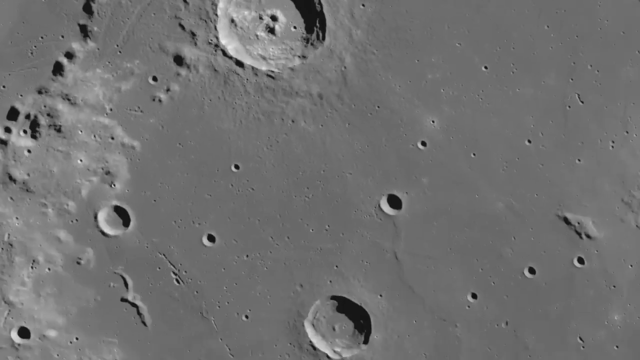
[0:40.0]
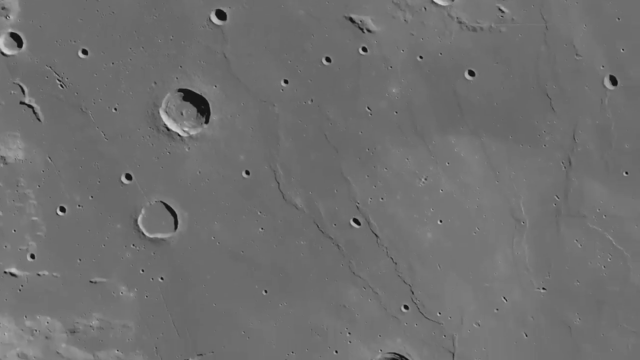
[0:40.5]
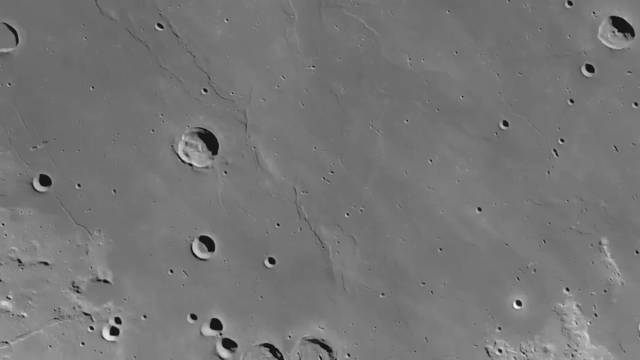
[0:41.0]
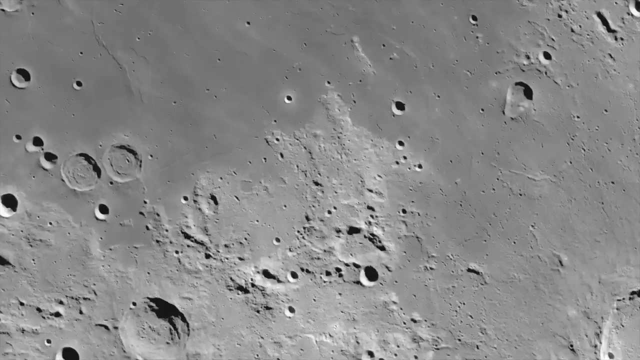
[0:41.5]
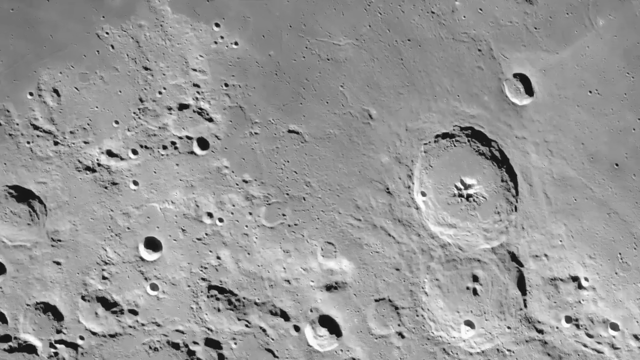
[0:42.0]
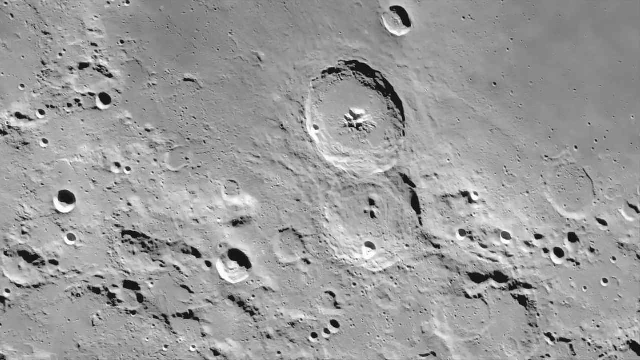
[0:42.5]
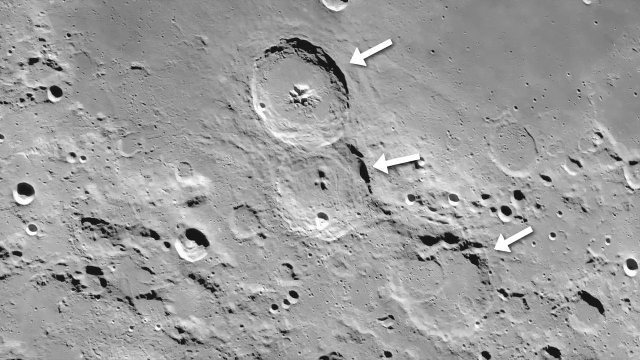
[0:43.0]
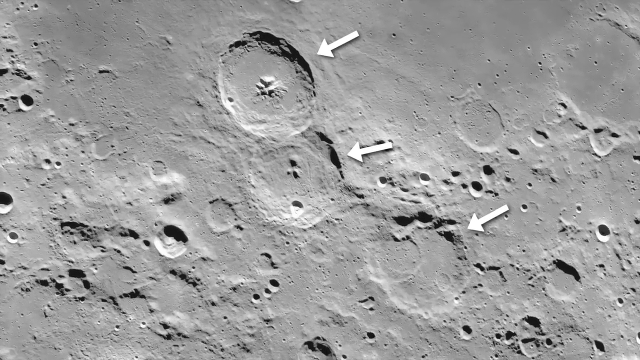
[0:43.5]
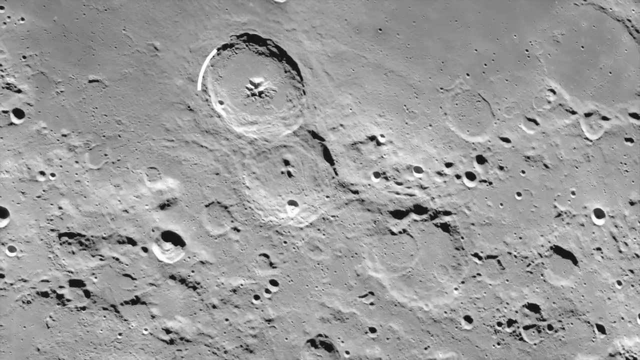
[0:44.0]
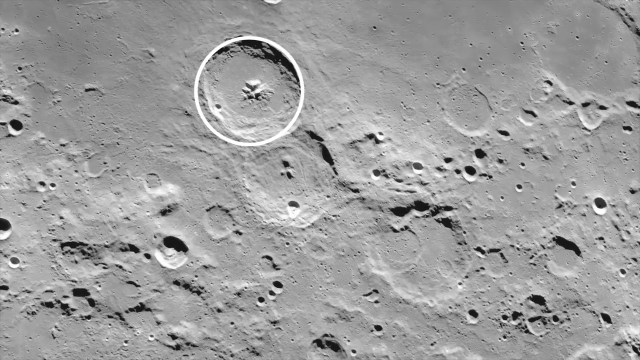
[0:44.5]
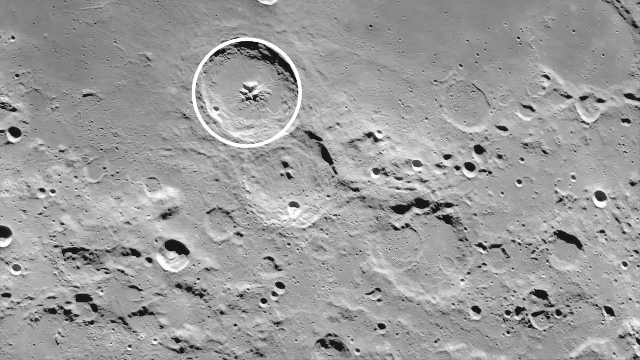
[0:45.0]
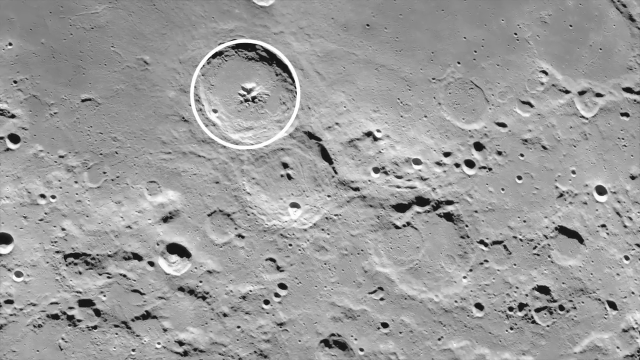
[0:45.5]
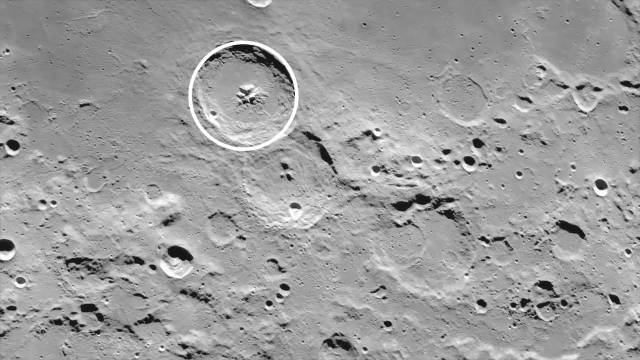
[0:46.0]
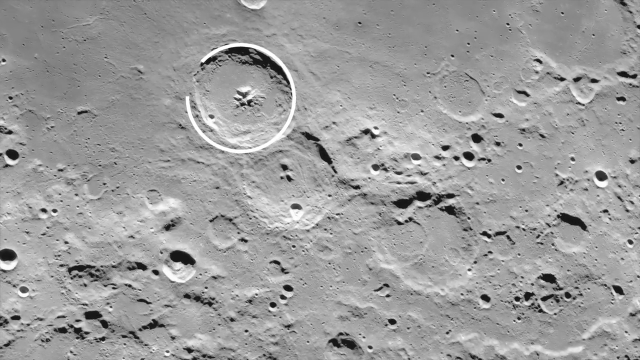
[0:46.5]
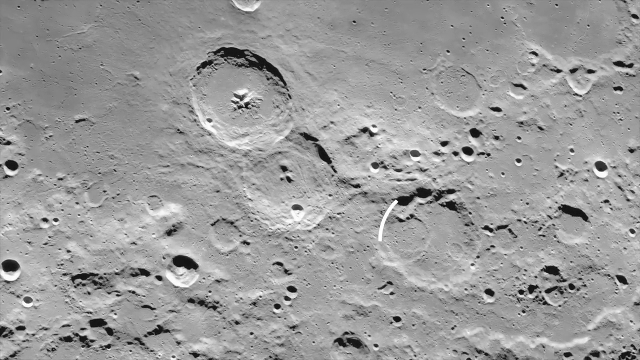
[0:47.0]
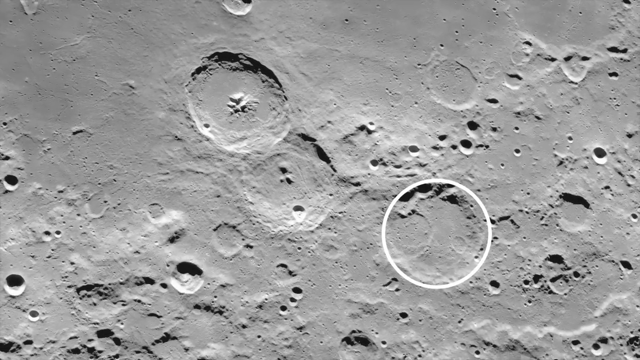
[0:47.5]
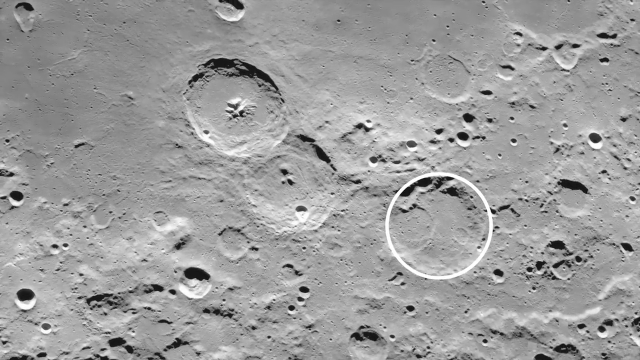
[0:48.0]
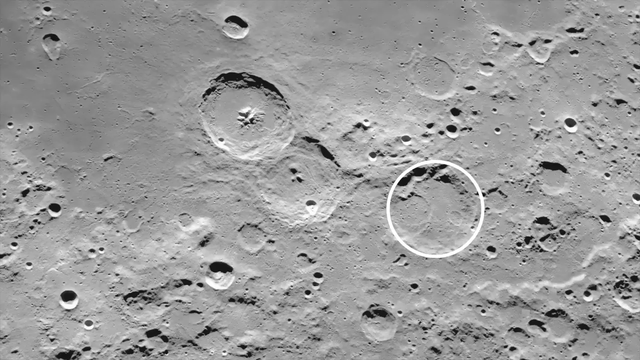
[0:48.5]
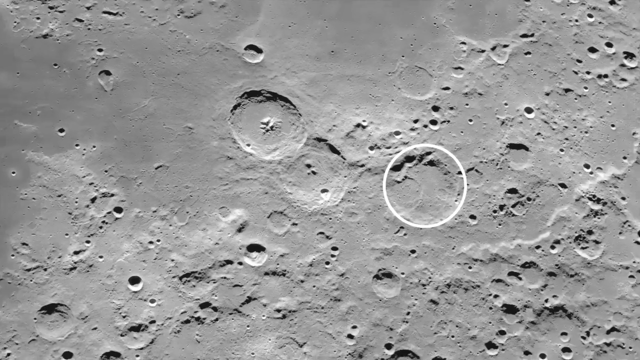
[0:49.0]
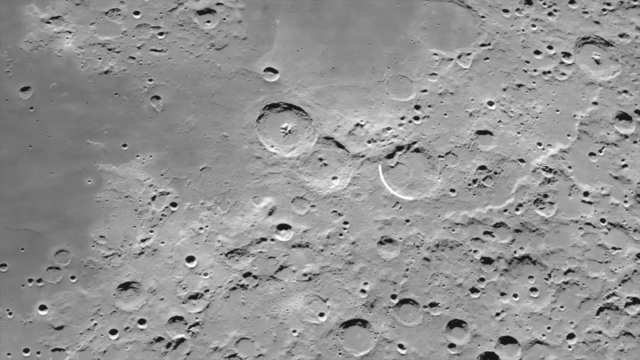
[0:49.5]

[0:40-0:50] A flat plain area of the moon is shown in black and white, with large stretches of completely flat plains dotted with large, small and medium-sized craters. The camera pans down and to the right before stopping at an area of more rugged terrain interspersed with large craters. Arrows appear around three separate craters that look to be complex, each showing inner walls as well as an outer wall, with the bottom right crater the least defined. The scene shows a contrast between the flat plain and the areas of craters from impact events.